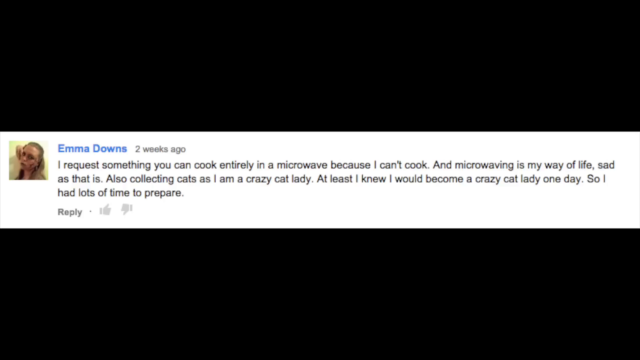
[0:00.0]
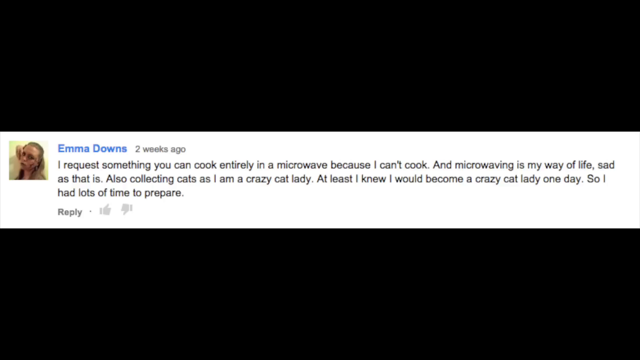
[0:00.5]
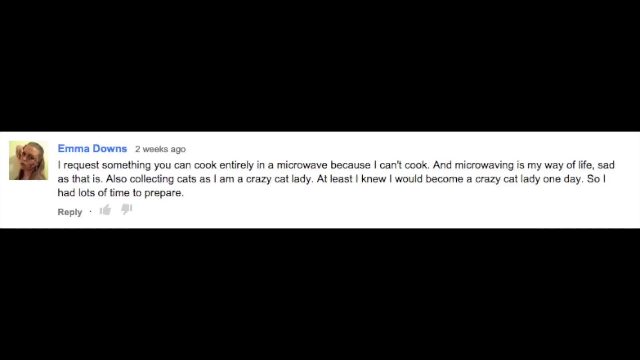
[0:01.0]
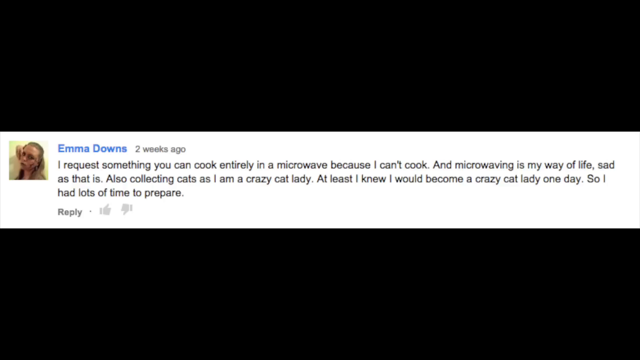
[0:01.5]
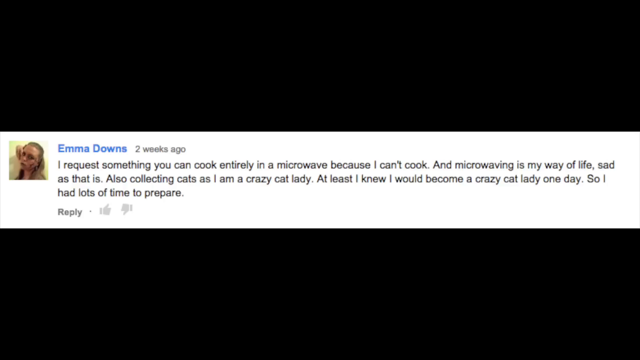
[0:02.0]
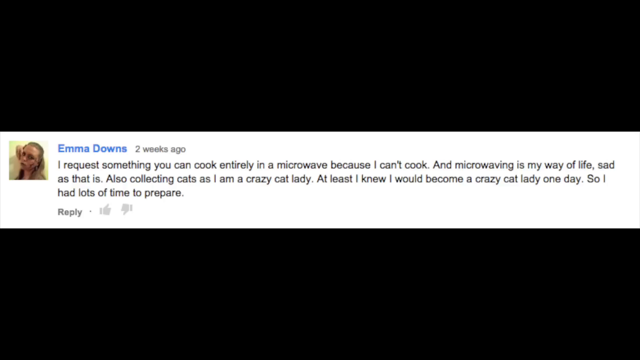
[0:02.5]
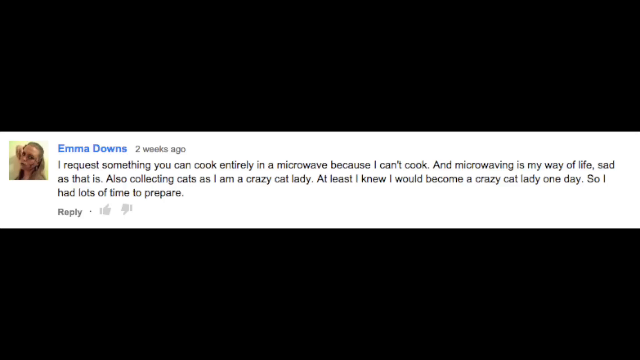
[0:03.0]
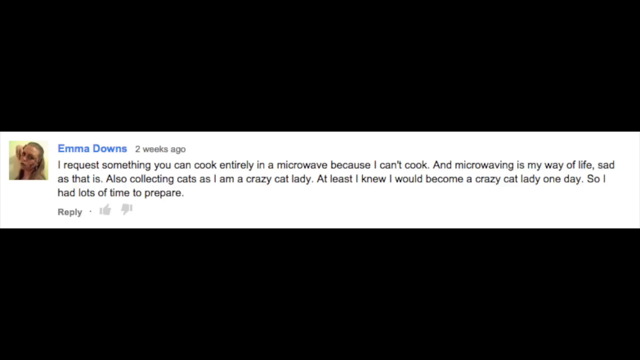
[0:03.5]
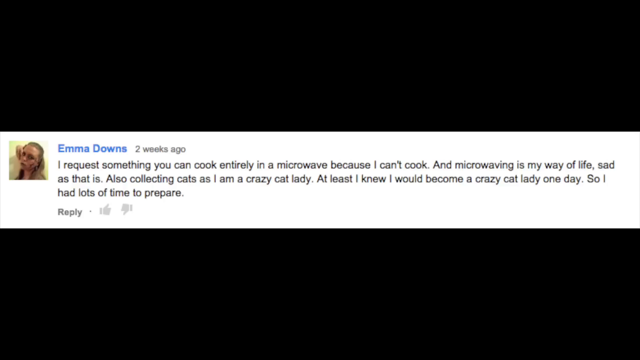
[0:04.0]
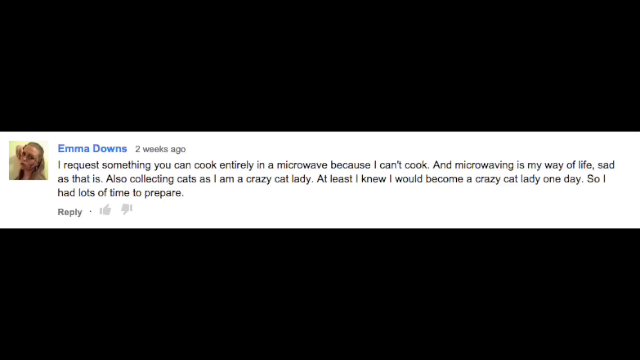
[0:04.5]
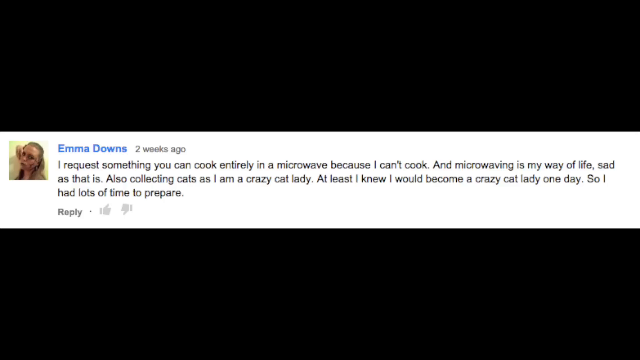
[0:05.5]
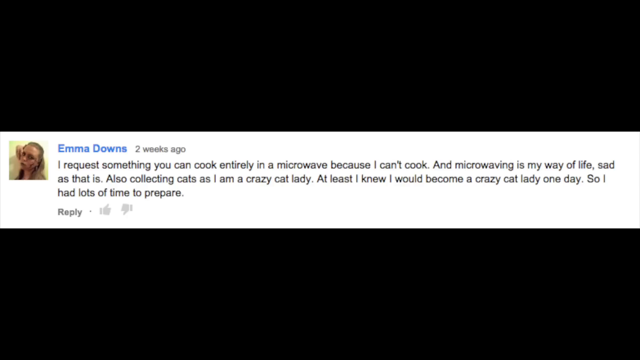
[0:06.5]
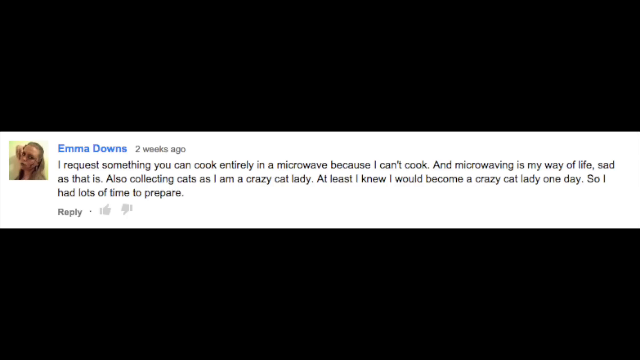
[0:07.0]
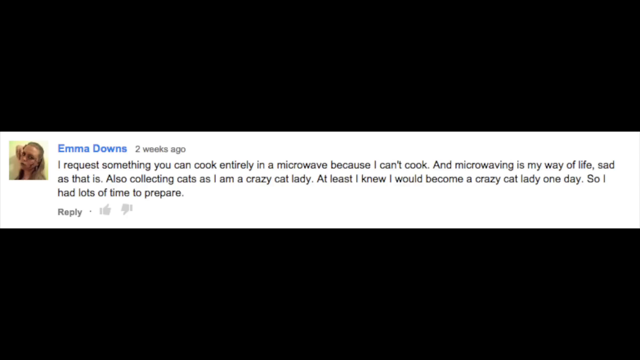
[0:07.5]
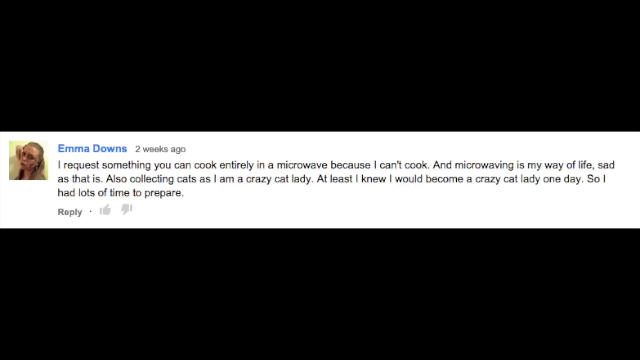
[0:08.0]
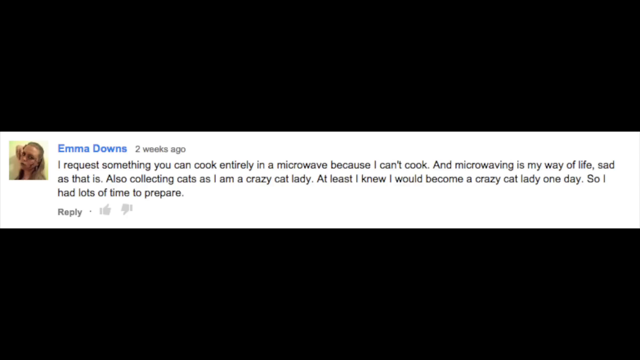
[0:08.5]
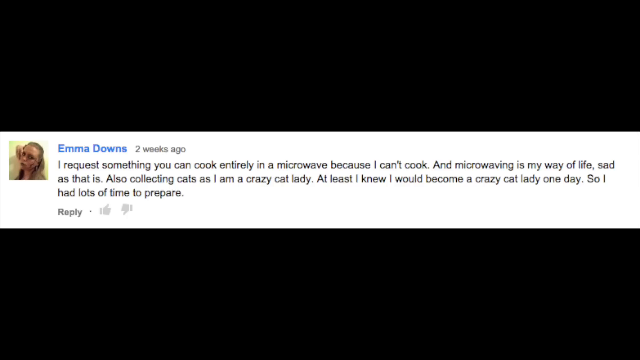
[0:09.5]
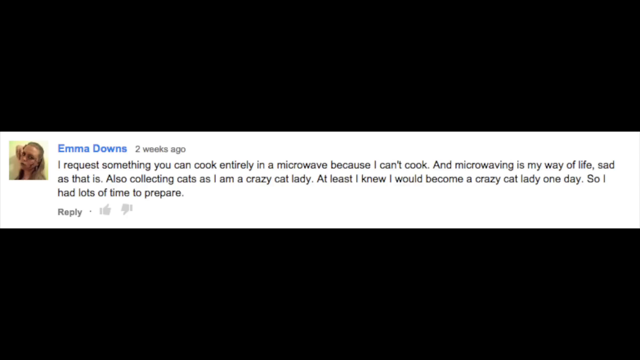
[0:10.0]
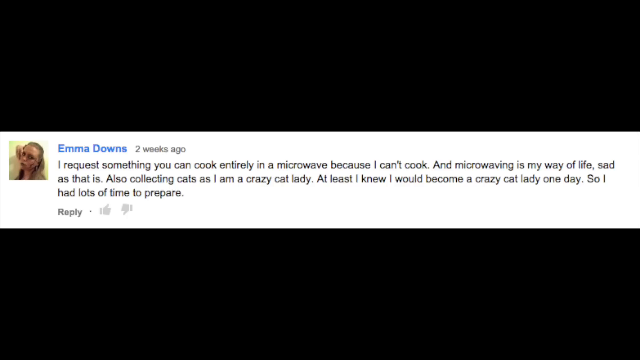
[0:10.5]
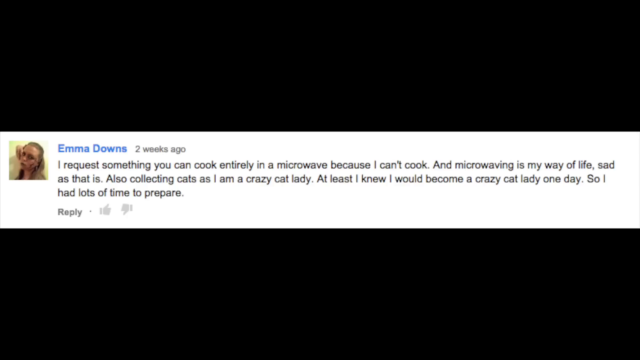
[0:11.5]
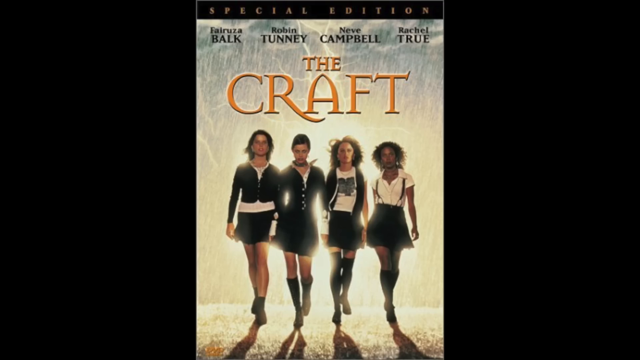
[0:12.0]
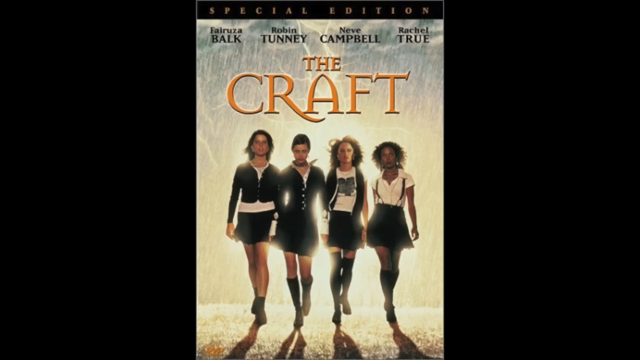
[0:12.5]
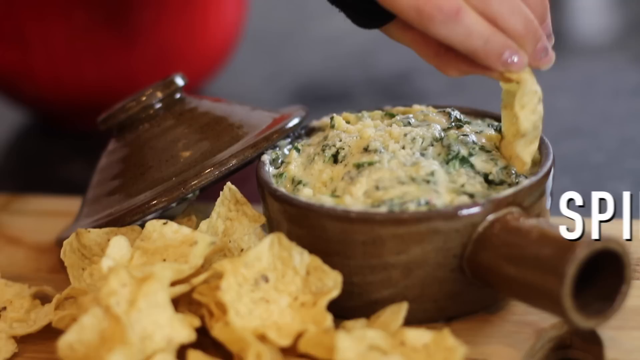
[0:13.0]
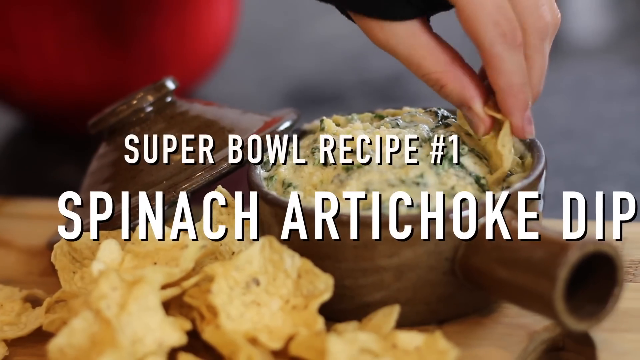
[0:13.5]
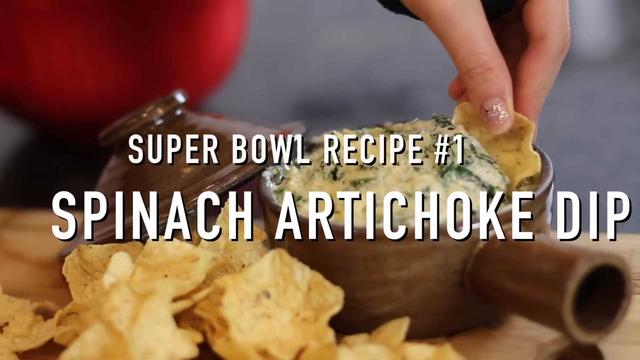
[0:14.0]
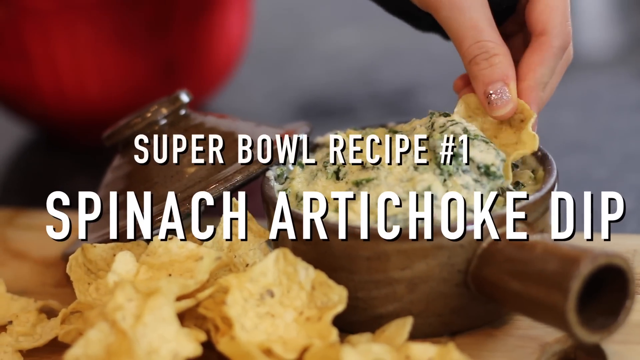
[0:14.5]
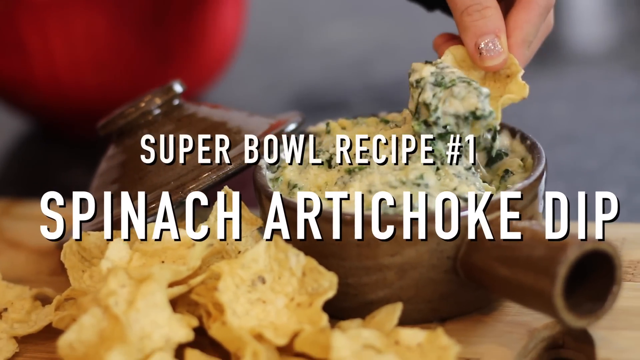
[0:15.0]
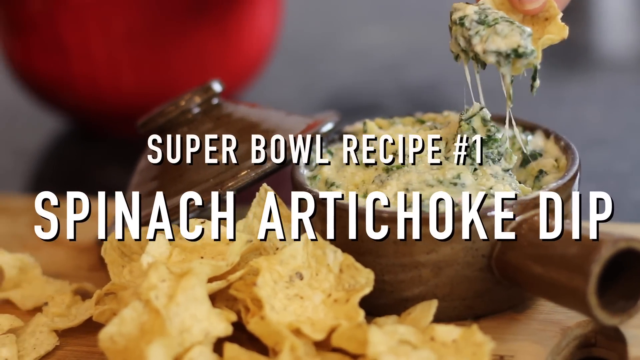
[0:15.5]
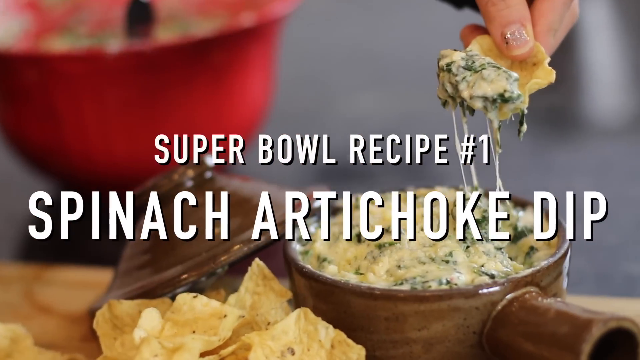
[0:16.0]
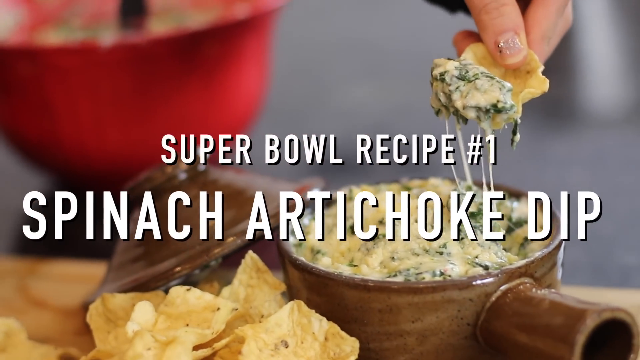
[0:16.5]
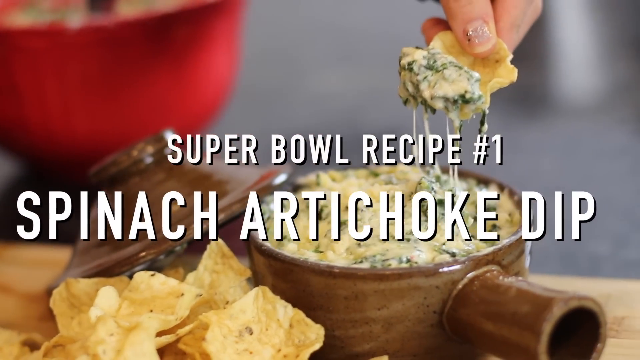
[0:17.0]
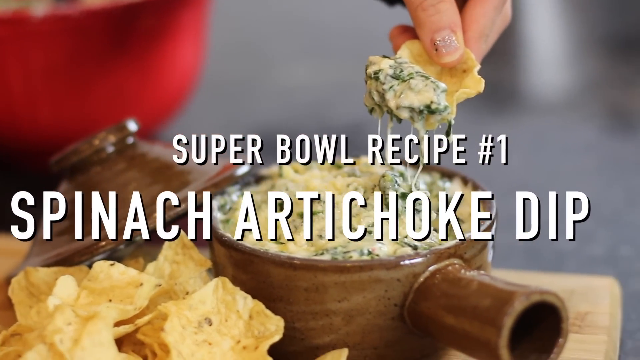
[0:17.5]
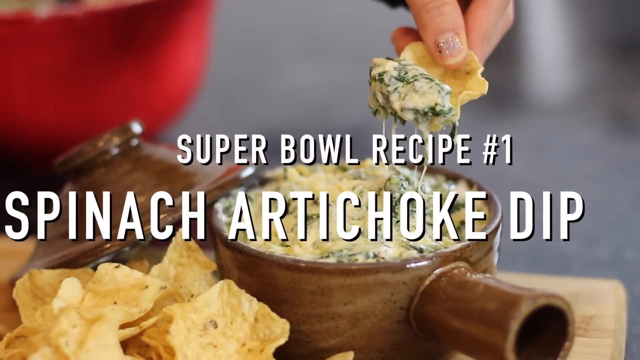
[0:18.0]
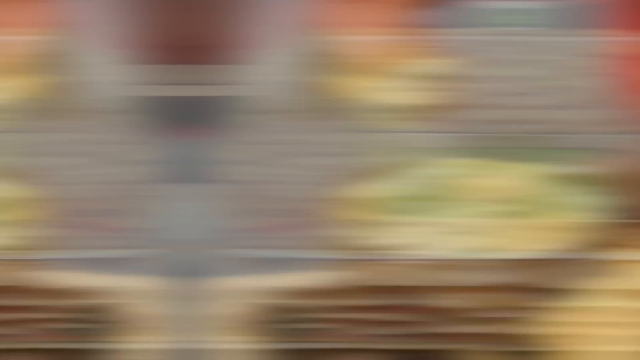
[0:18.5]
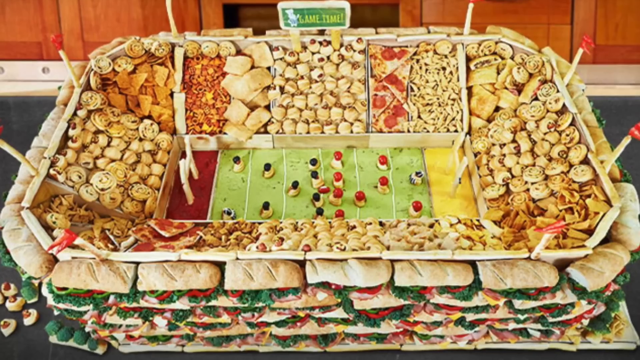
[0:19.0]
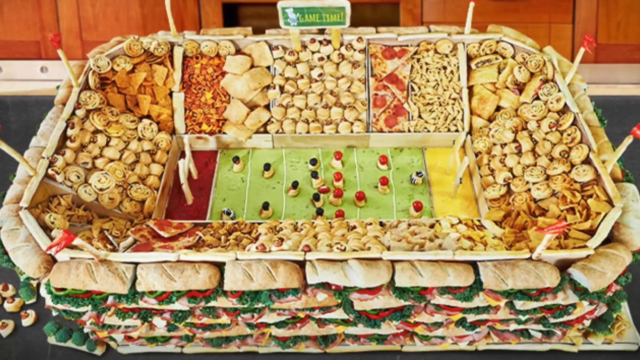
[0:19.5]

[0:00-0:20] A comment from someone named Emma Downs appears, reading: "I request you can cook entirely in a microwave because I can't cook and microwave is my way of life sad as that is also collecting cats as I am crazy cat lady at least I know I would become a crazy cat lady one day so I had lots of time to prepare." Next, text reads "Super Bowl recipe number one spinach artichoke dip." Chips and salsa are shown, along with a red bowl in the background holding chips, cheese and some artichoke dip. A little cartoon pig is in the bottom right corner. The artichoke dip looks very cheesy. There is a kind of football arena made with the food, and it looks very well prepared.